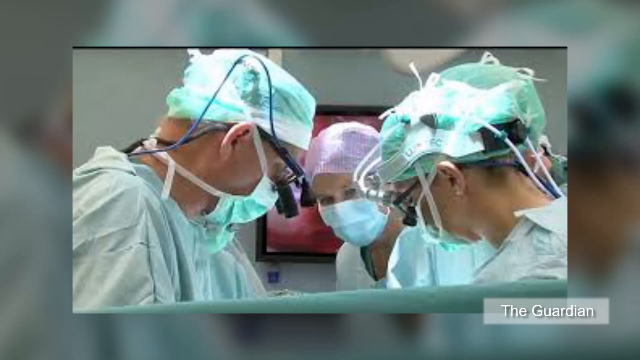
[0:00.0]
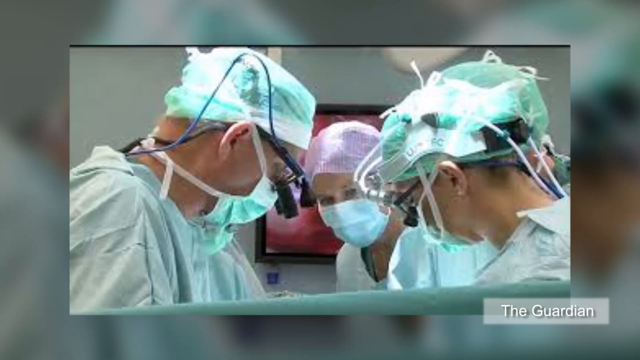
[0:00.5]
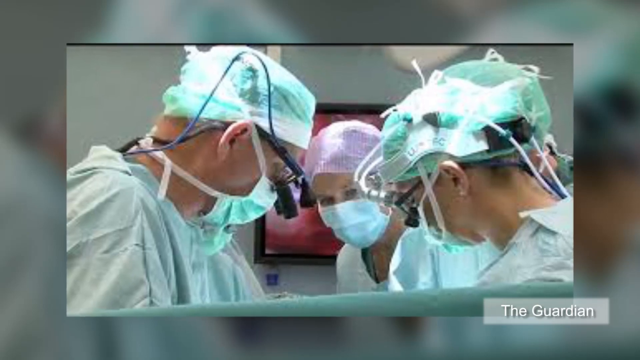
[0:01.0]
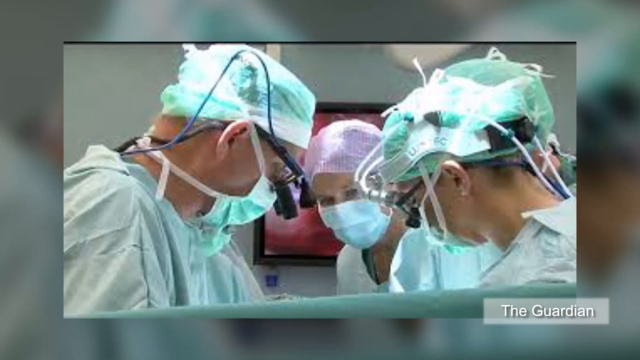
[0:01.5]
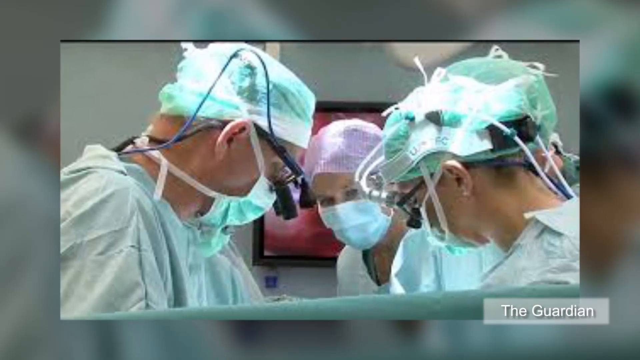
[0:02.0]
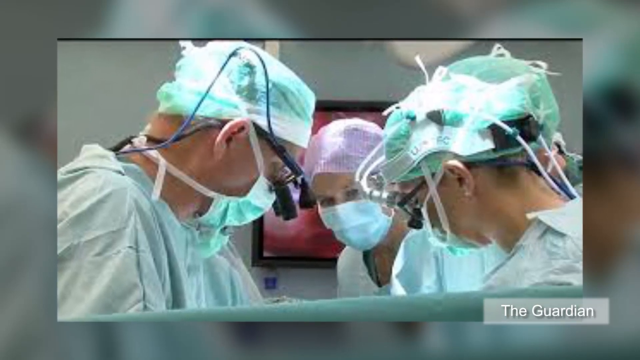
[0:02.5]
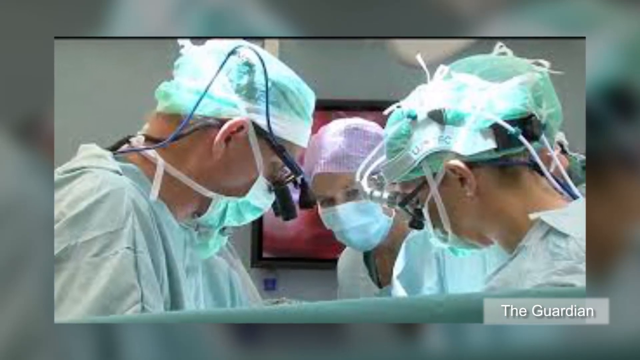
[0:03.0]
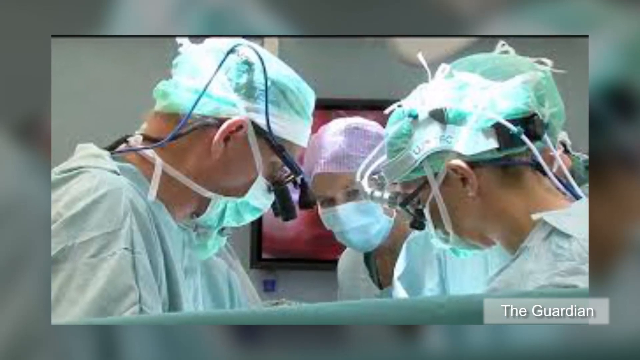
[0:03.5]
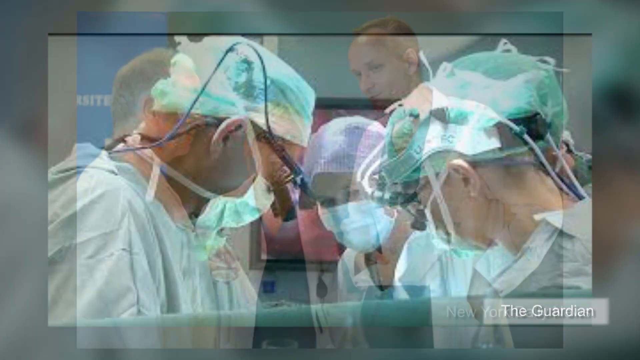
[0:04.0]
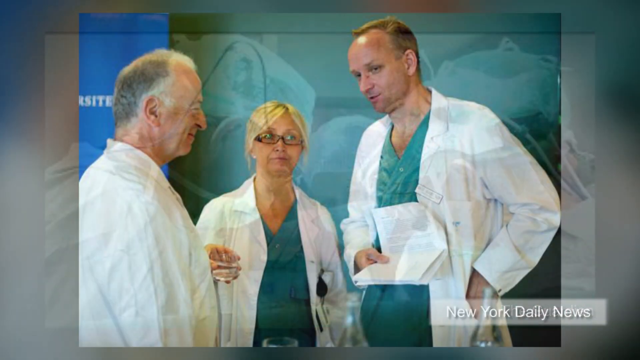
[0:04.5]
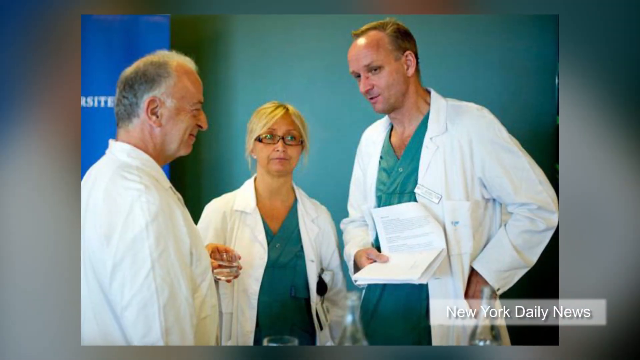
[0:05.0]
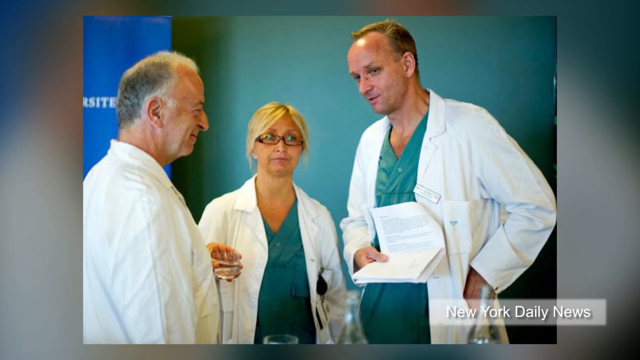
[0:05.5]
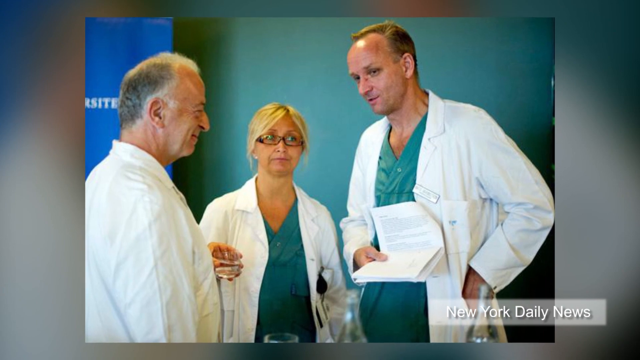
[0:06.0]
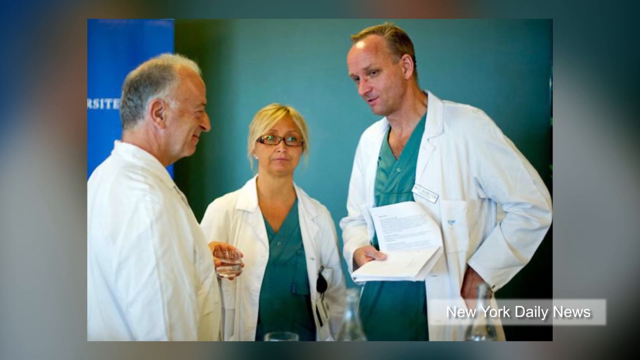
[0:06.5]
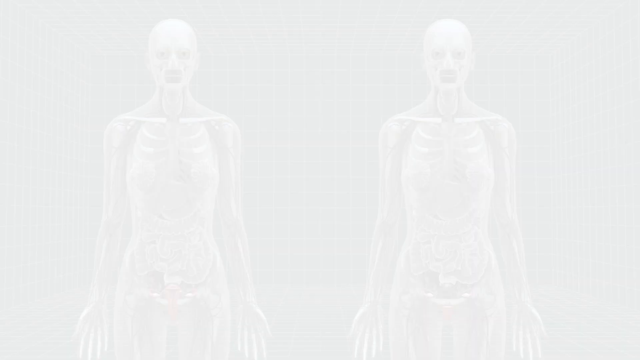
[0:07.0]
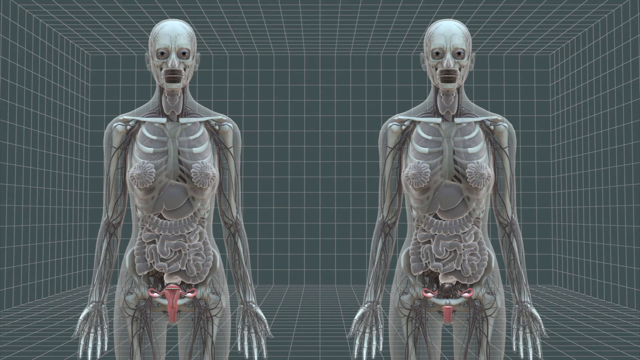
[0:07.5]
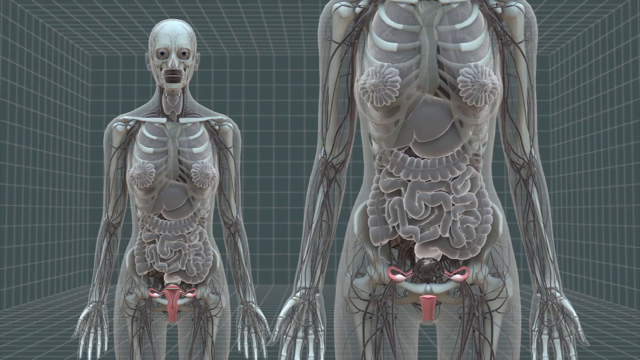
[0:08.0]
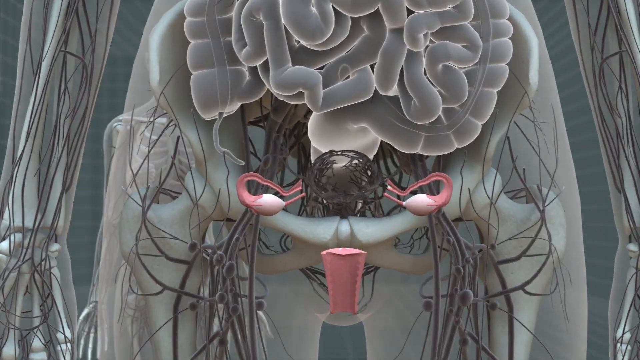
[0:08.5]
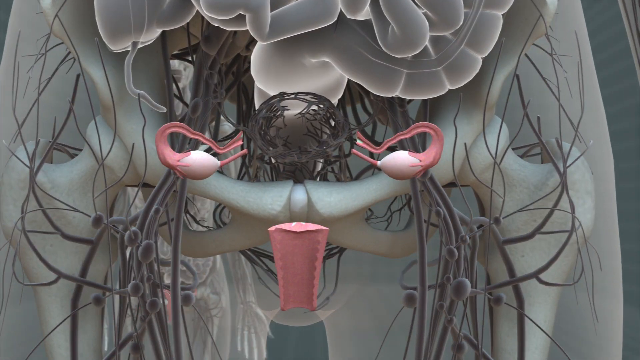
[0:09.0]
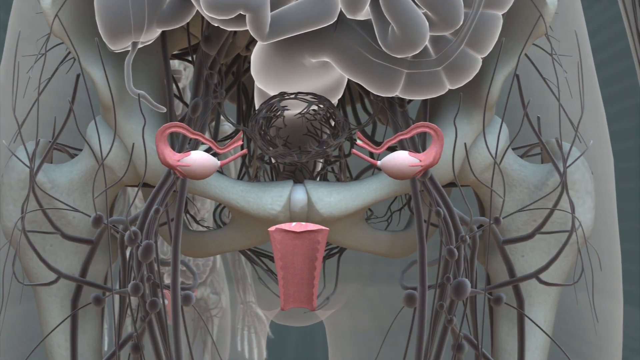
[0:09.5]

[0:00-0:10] A still shot shows the heads of people in a sort of medical setting. Three of them wear light green caps and green scrubs; a fourth wears a green mask and light-colored scrubs as well, but a pink hat. Next, three people wear typical white doctor-type coats; two are men and one is a woman, and the man farthest to the right holds a set of papers in his hand. This is again kind of a still shot. Next come two sort of medical-type display dolls, or at least person-like plastic figures, with intestines and other organs visible. One of them is then shown in a close-up of its mid-to-low section, where something that looks perhaps like ovaries appears; the rest of the image is more gray, but those parts of the organs are pink.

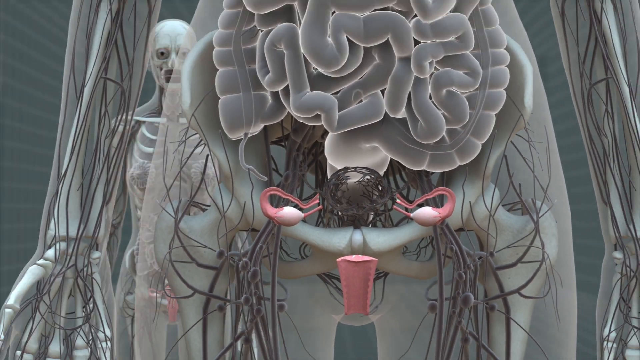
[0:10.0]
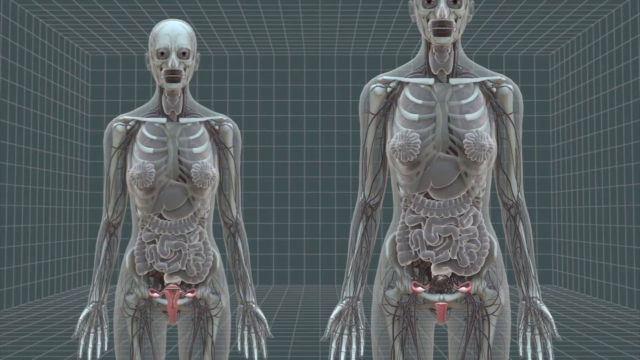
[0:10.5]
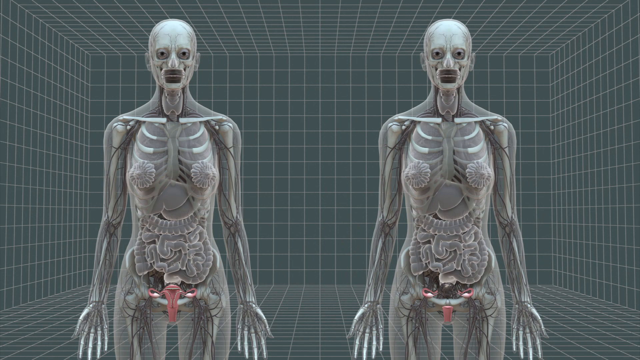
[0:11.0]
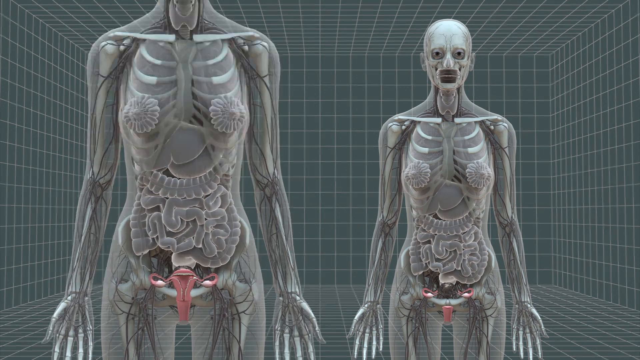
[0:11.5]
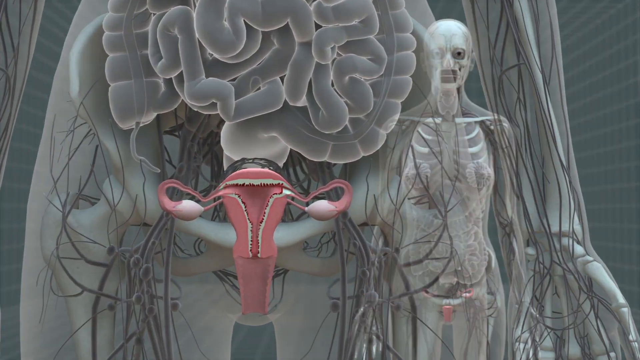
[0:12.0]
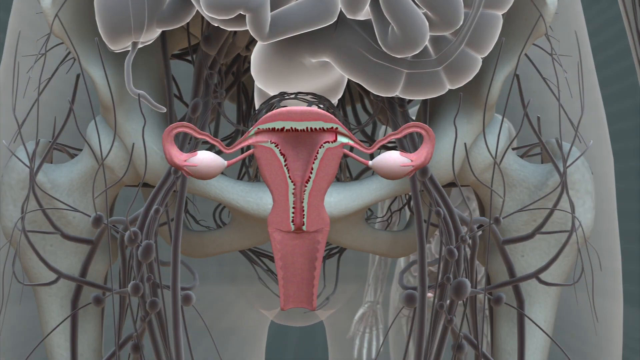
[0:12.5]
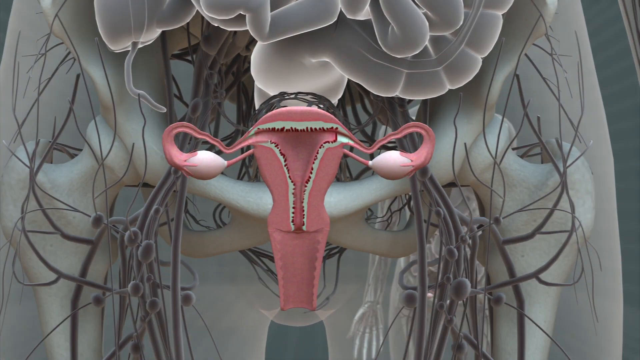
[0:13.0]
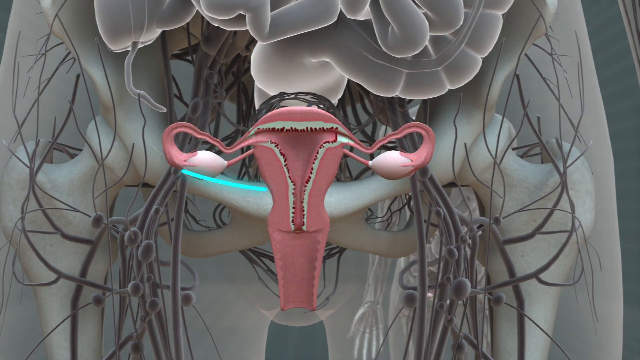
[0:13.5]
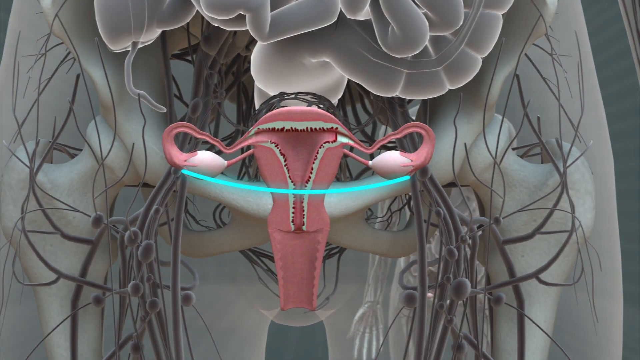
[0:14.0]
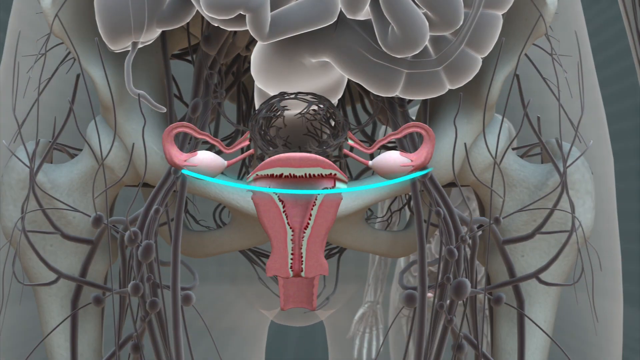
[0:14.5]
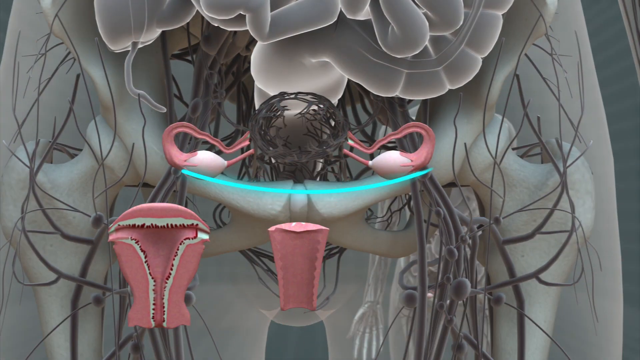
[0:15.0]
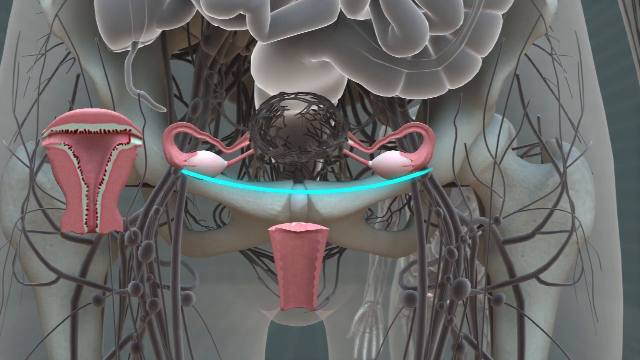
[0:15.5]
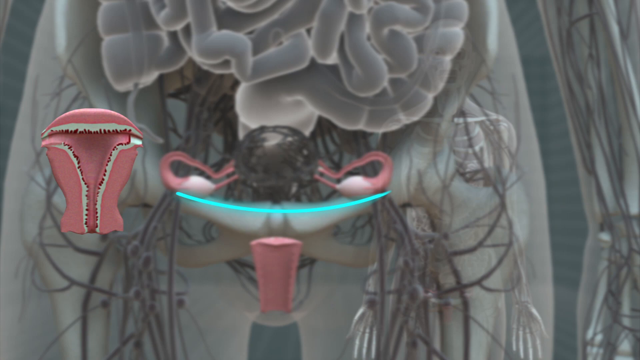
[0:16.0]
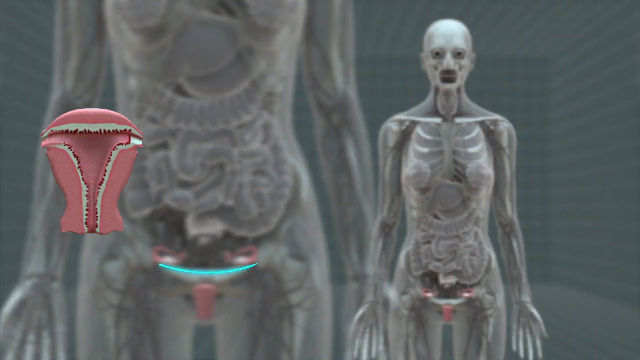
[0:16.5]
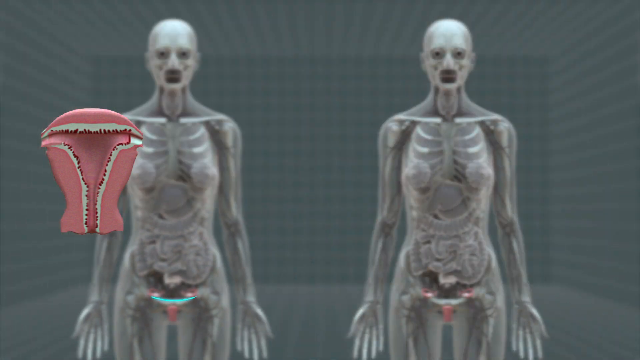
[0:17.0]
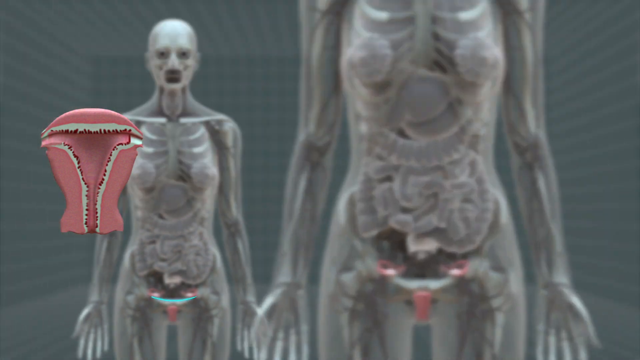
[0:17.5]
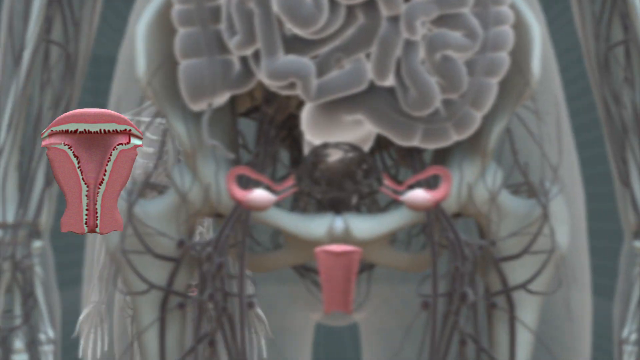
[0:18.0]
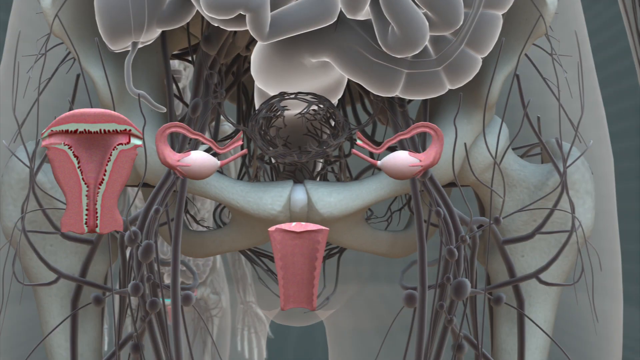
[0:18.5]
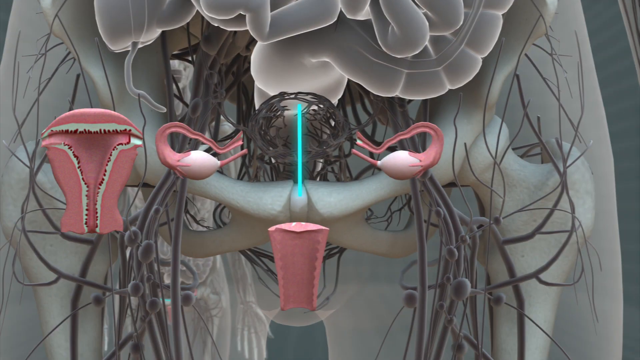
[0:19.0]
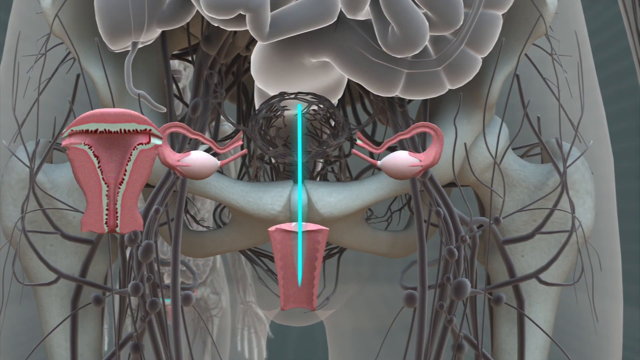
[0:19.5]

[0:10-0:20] Two plastic-looking figures of people are shown; the left one comes forward and the right one goes backward. Something that looks like a female reproductive organ system is shown, and a kind of teal, electric-looking line of light moves from left to right. Part of the female reproductive system then appears to be cut, and it goes back to the left. The cut piece then seems to be moved to the other figure and put in its place, in a kind of transplant-like way. There is no stitching: it is simply removed from the left figure, set aside, and placed in the right one. A teal line goes vertically from top to bottom in the area where the item is going to be placed.